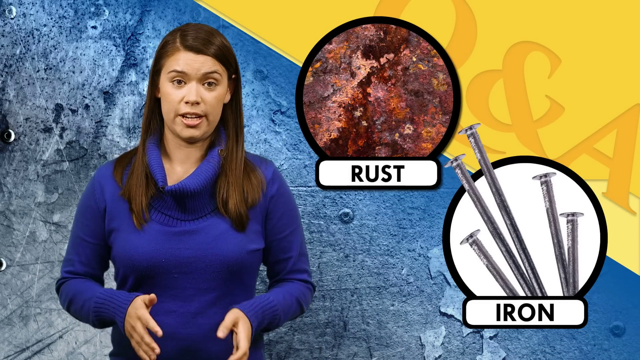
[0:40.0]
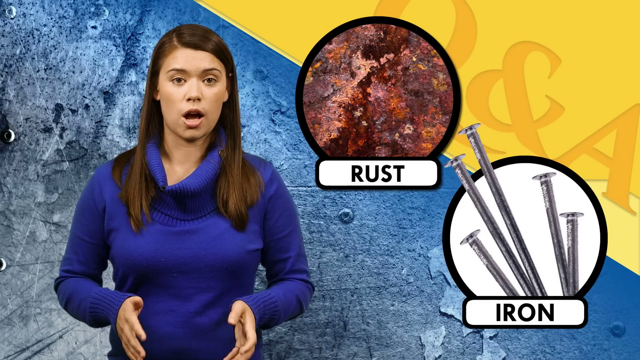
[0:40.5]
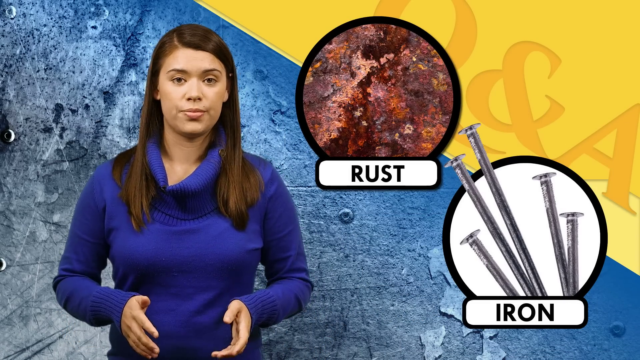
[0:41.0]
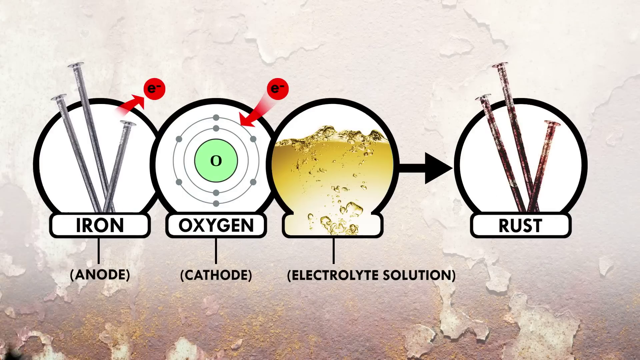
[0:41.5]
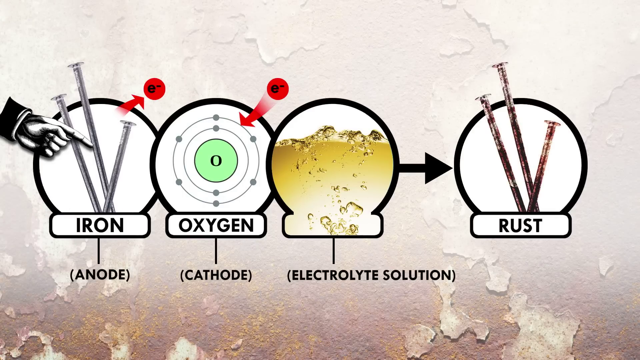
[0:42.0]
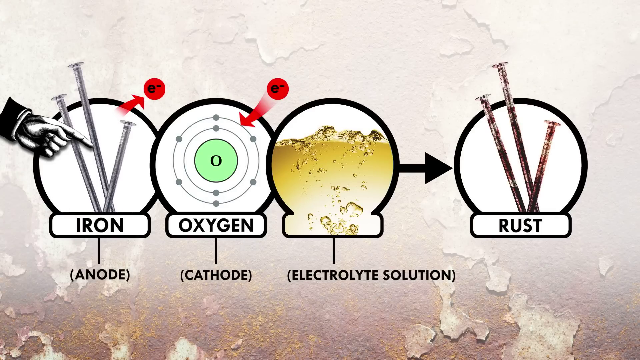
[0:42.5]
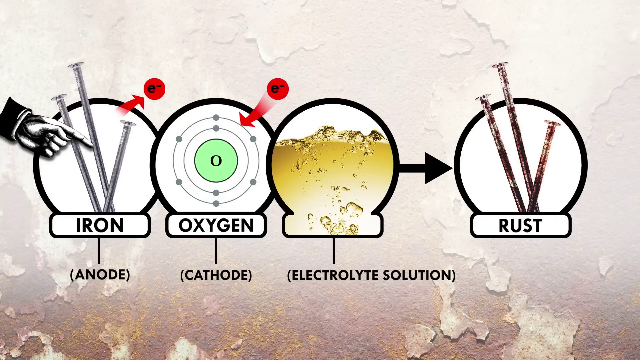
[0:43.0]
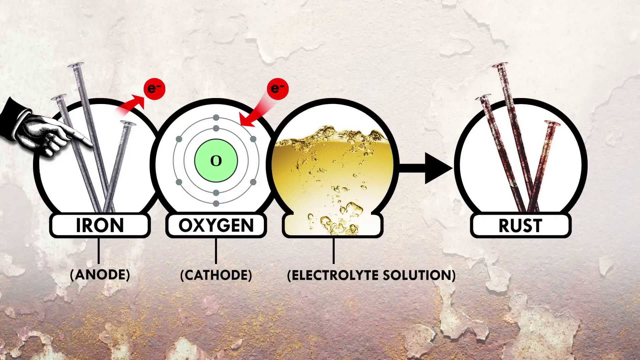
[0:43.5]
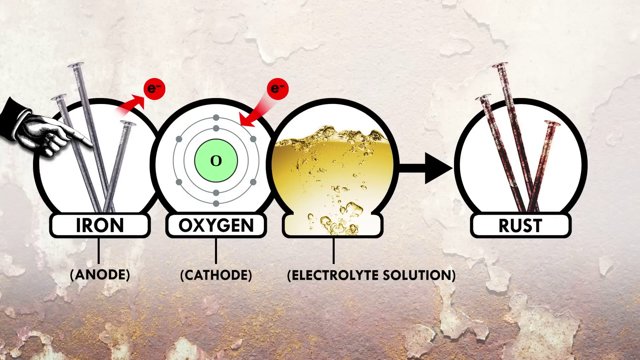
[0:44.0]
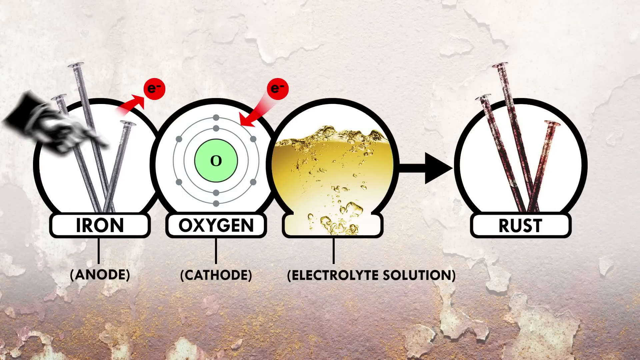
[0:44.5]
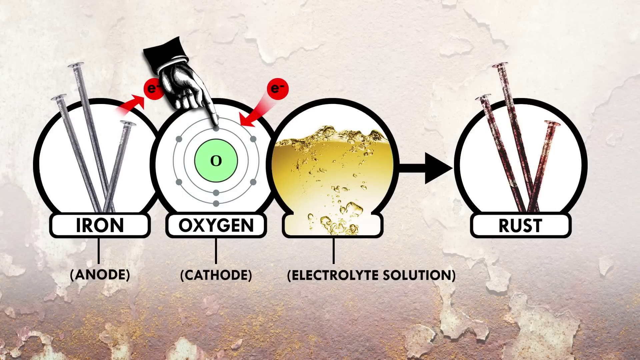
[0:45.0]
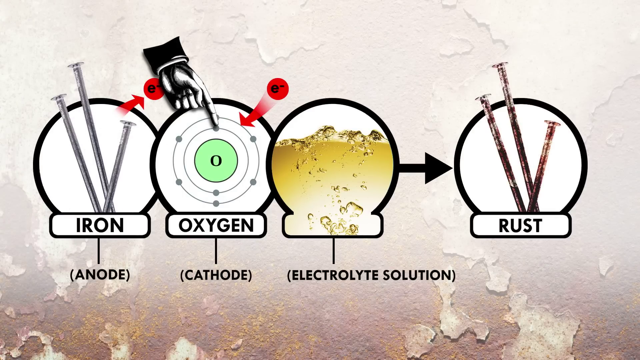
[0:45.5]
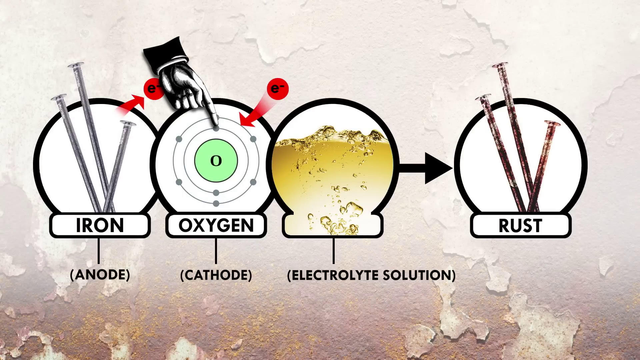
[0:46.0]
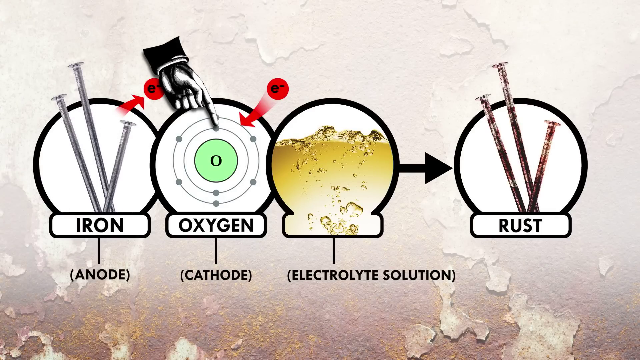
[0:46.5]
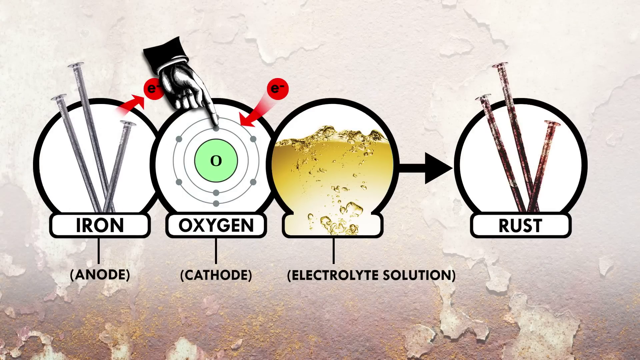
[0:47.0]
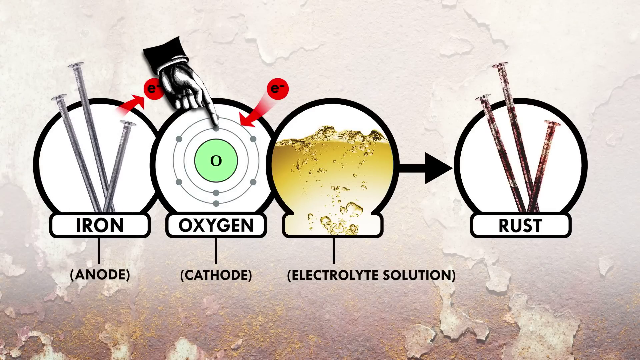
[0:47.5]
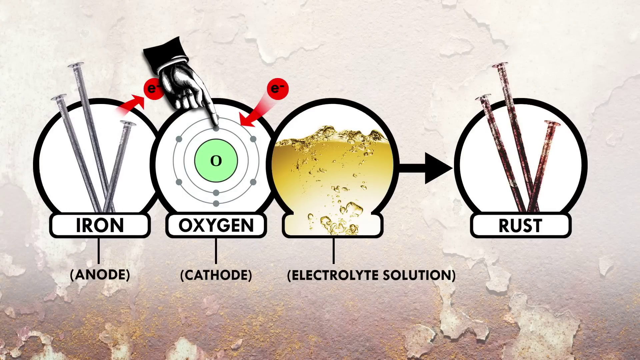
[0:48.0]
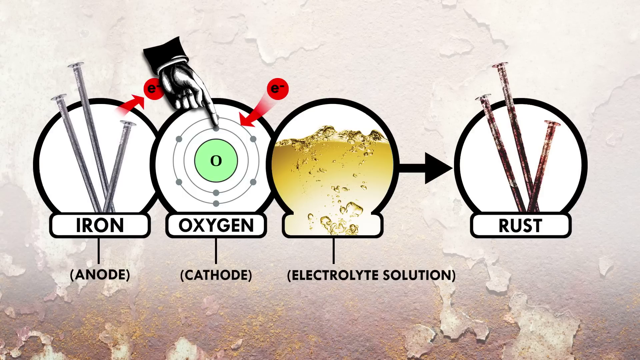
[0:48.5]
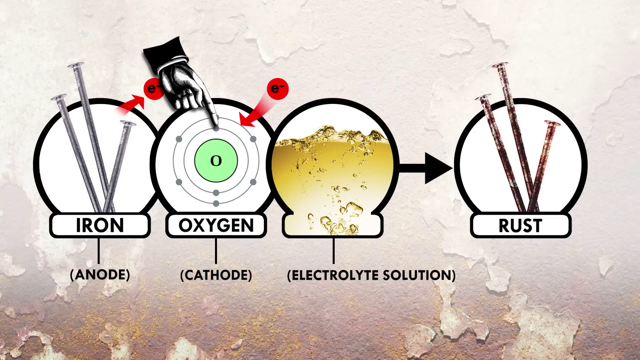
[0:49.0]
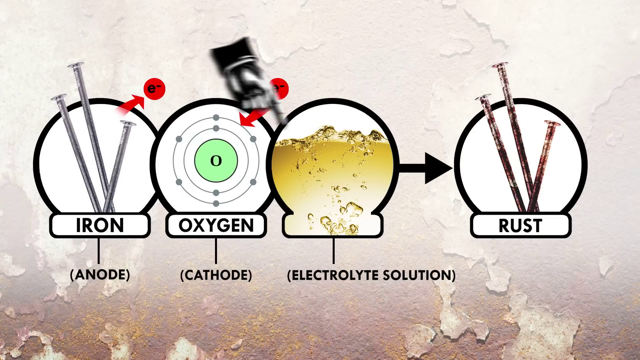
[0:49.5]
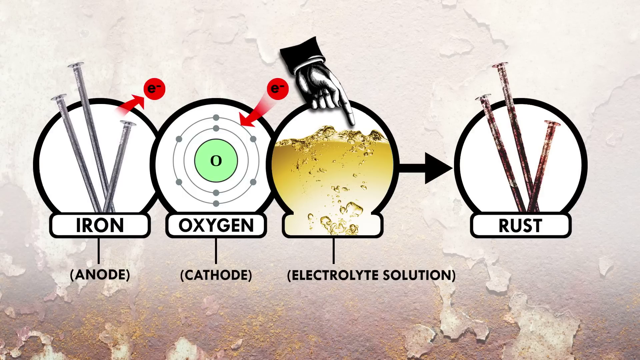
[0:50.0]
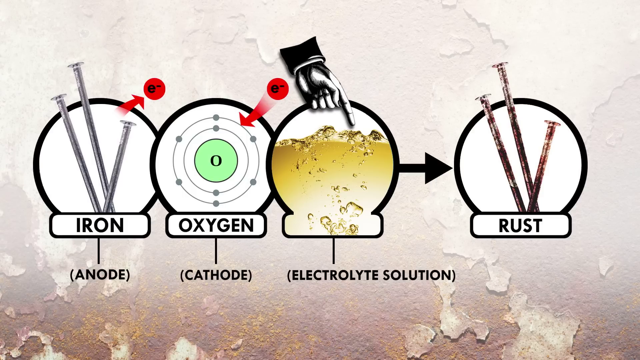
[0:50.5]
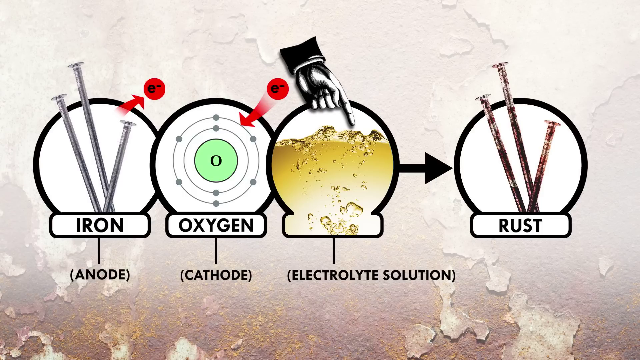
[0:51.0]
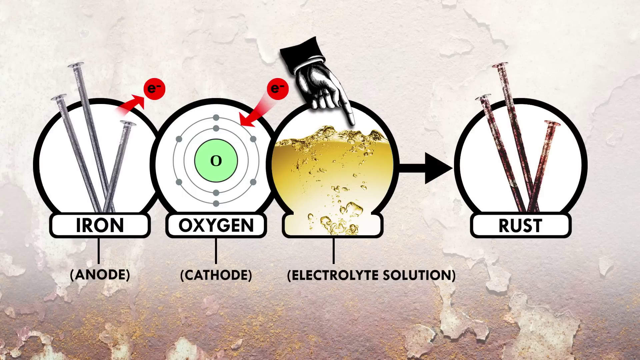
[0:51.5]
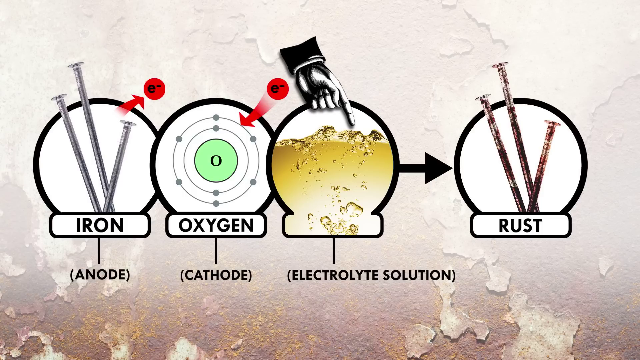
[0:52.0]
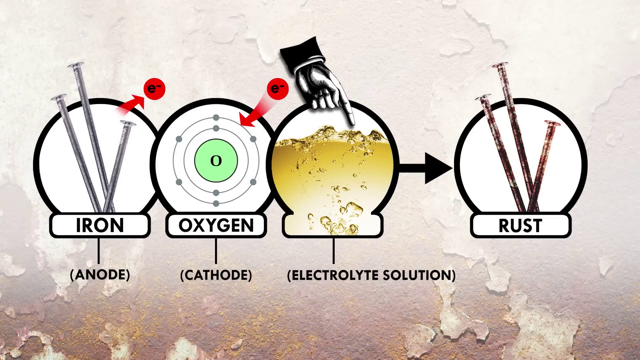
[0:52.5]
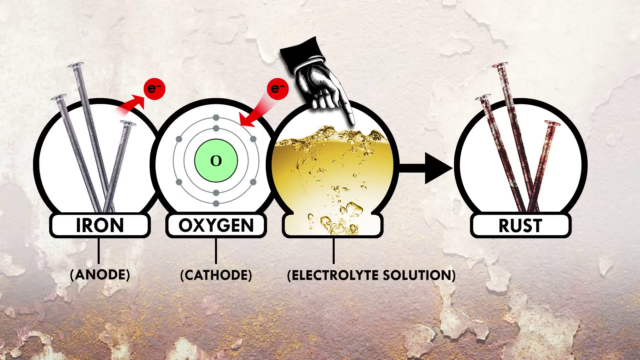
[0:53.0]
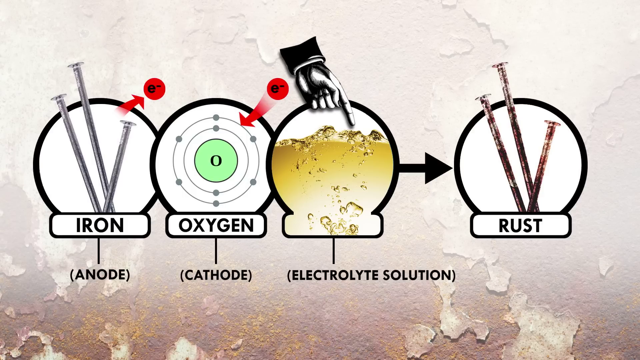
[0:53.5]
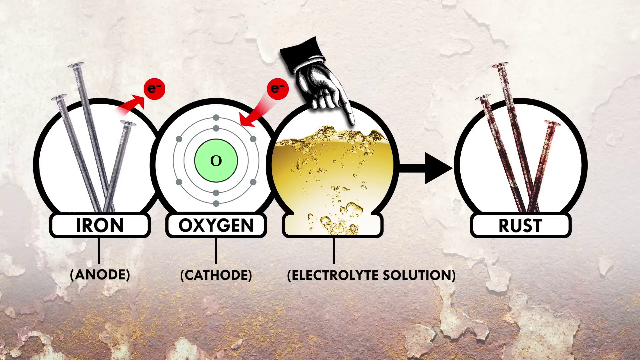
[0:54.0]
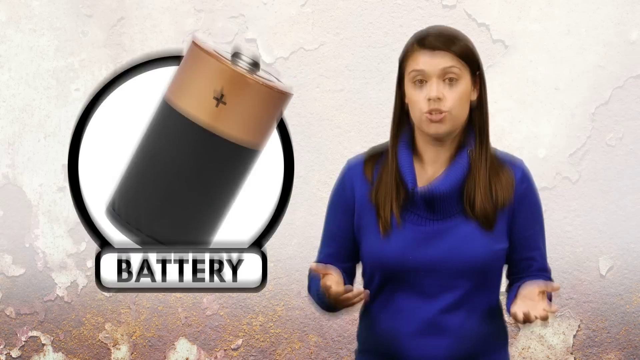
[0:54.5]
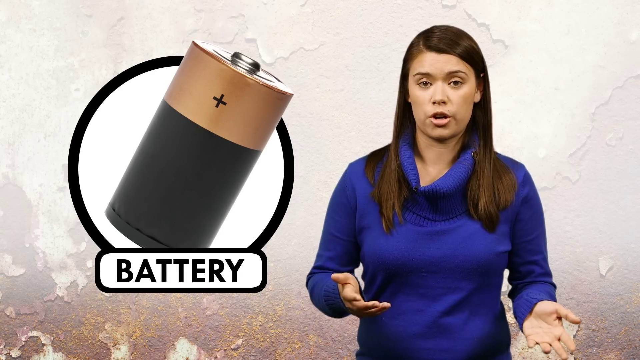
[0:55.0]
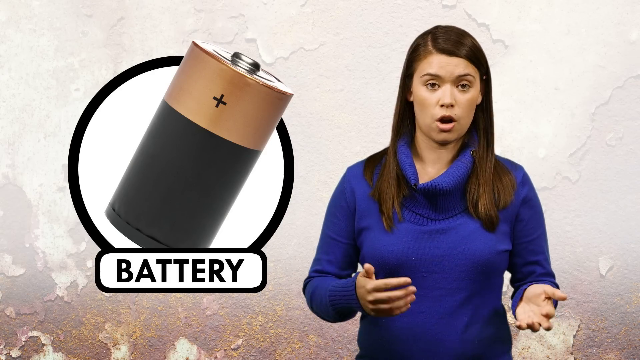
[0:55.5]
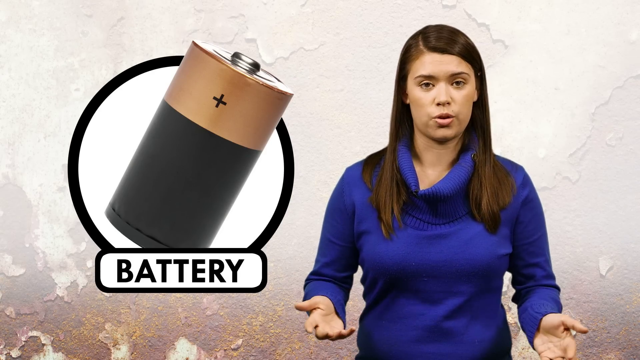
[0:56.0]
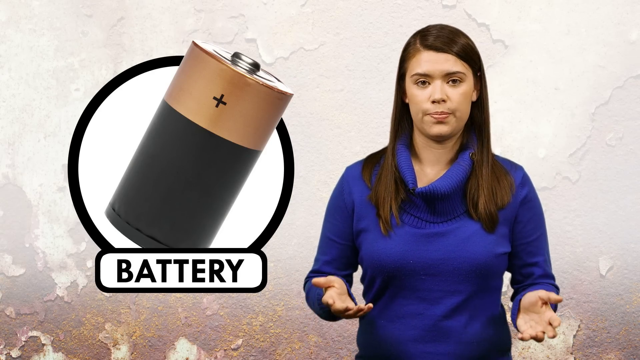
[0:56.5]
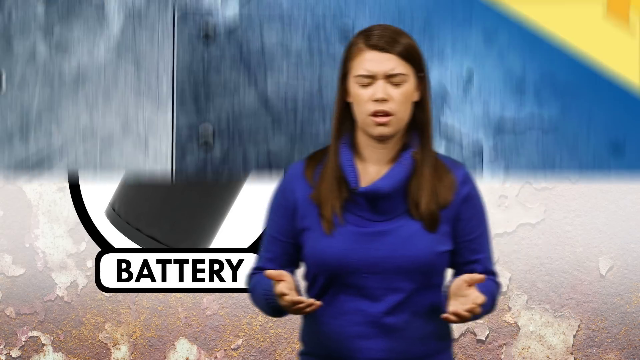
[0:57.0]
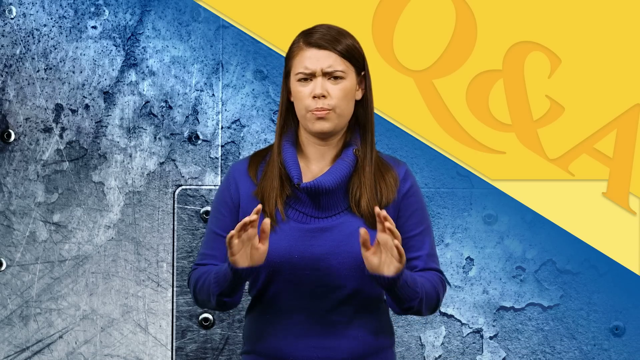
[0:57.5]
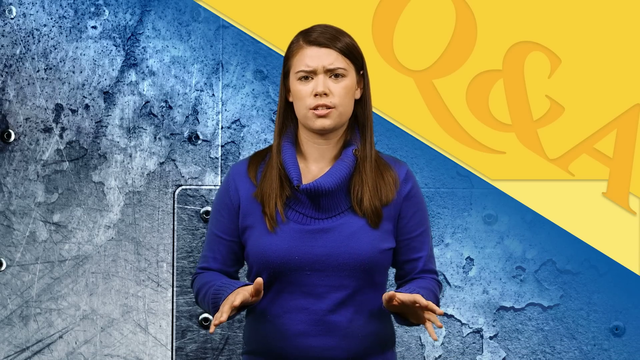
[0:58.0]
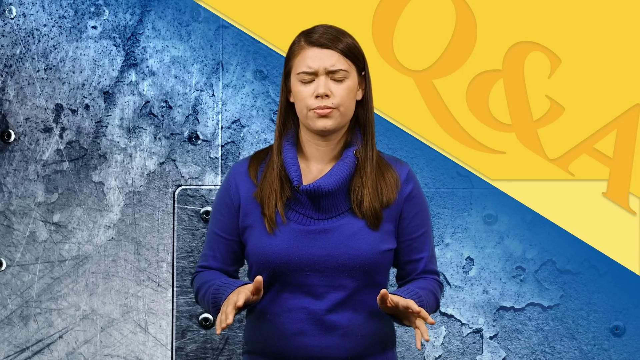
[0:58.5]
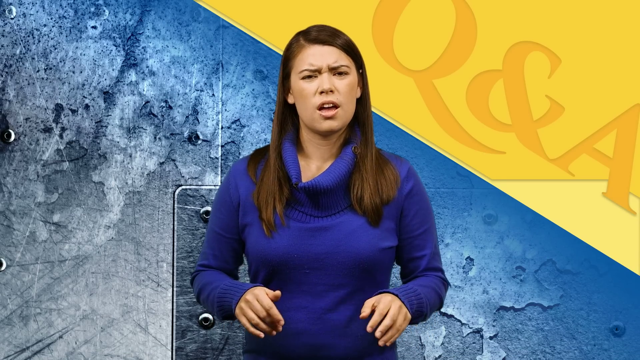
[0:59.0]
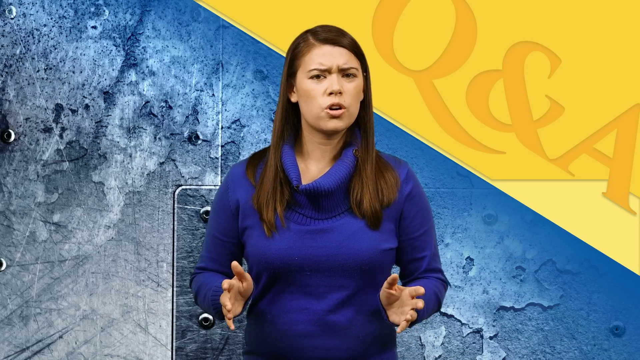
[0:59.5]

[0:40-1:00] There is a picture of a bolt, a picture of iron, a picture of oxygen and an electrolyte solution, with an arrow pointing from those to another picture of rust. Sophia comes back up next to a battery with a plus sign that is black with a brown top. A hand points to iron and anode, cathode and oxygen, and there are bullseyes. The electrolyte solution looks like a liquid, like water bubbling. The iron is shown as three nails, and the oxygen is a bullseye with a green middle with an O in it. Sophia speaks to the camera with the battery picture next to her and a Q&A behind her; something riveted to the wall behind her looks like maybe wood. The hand moves over to the electrolyte solution. Arrows point away from iron, an arrow points in towards oxygen, and an arrow points out from the electrolyte solution to rust.